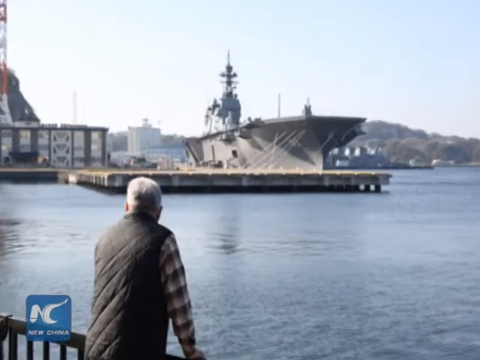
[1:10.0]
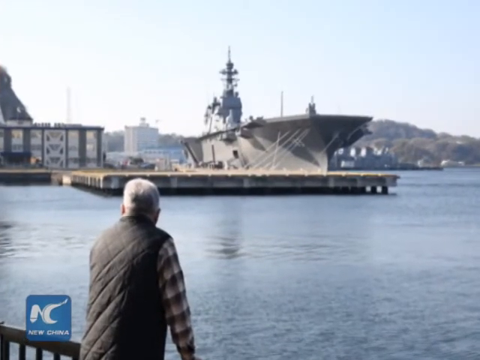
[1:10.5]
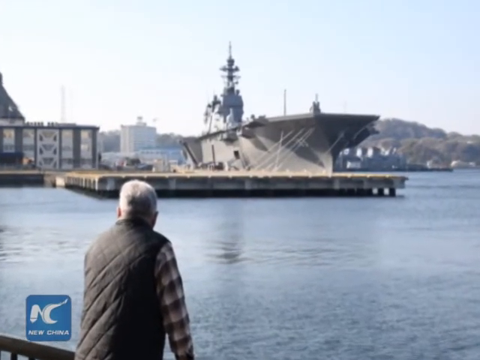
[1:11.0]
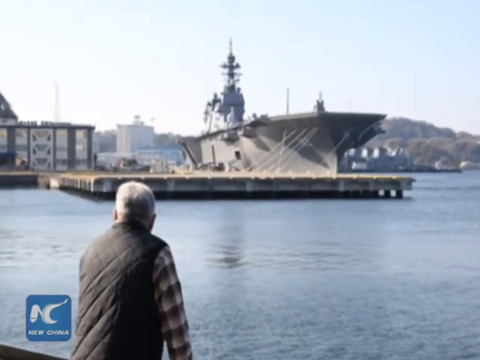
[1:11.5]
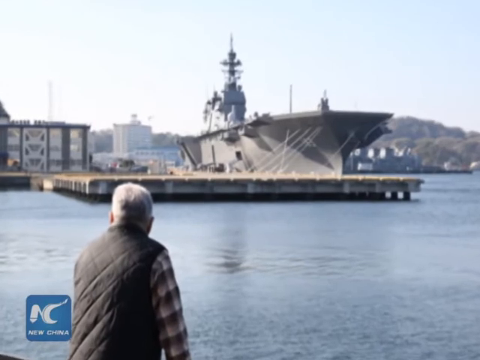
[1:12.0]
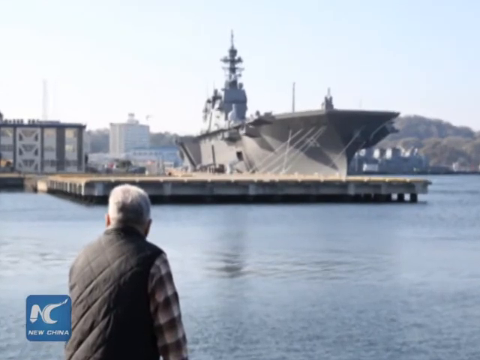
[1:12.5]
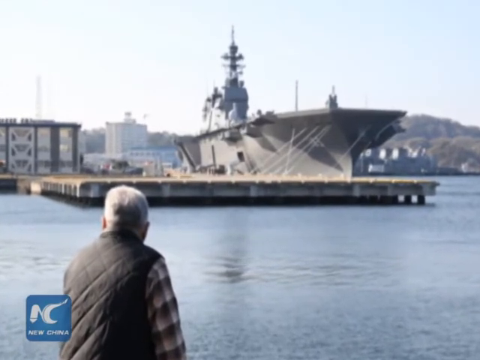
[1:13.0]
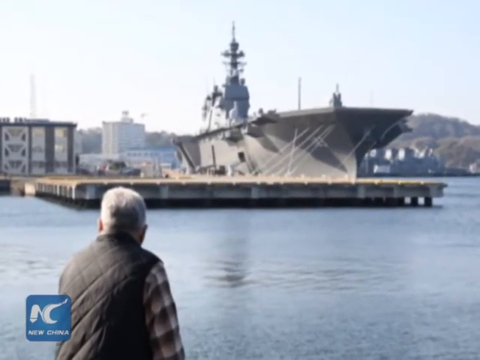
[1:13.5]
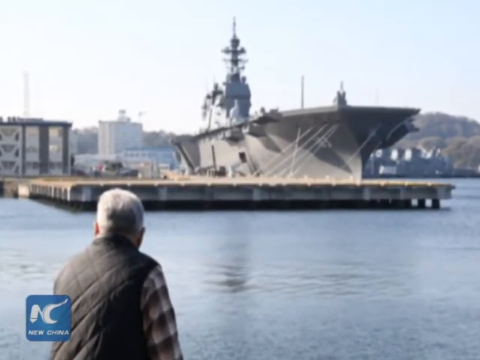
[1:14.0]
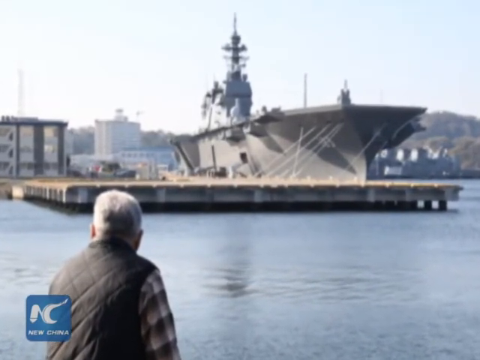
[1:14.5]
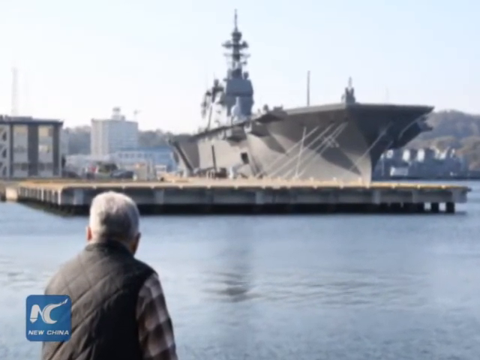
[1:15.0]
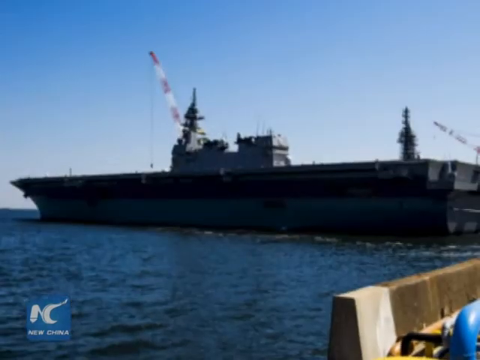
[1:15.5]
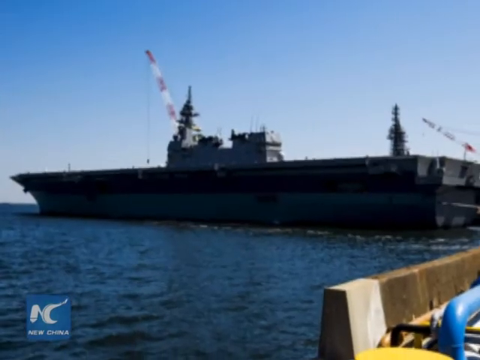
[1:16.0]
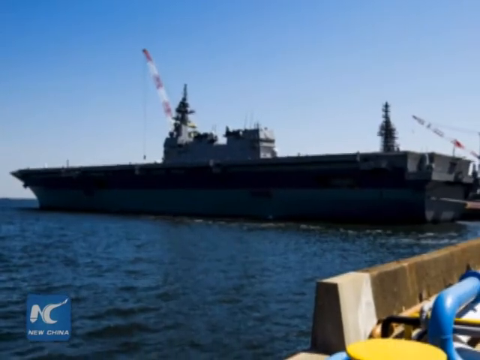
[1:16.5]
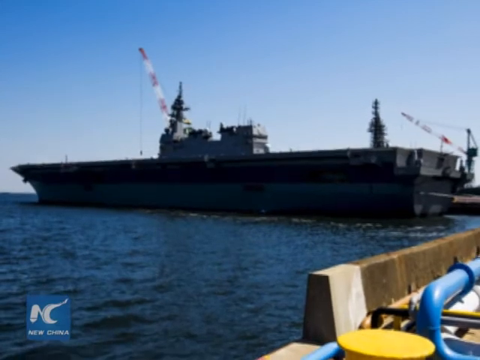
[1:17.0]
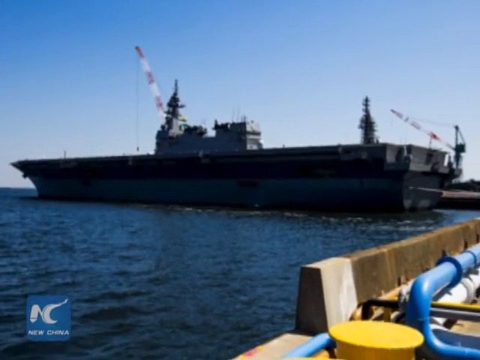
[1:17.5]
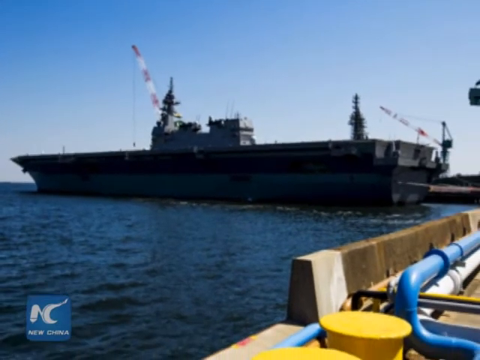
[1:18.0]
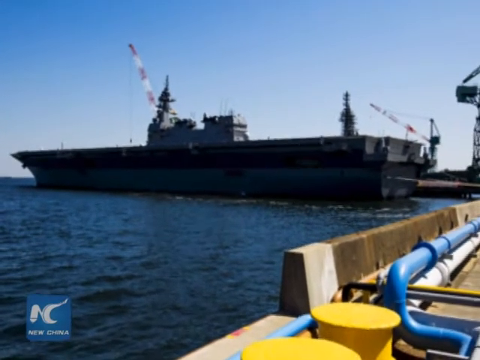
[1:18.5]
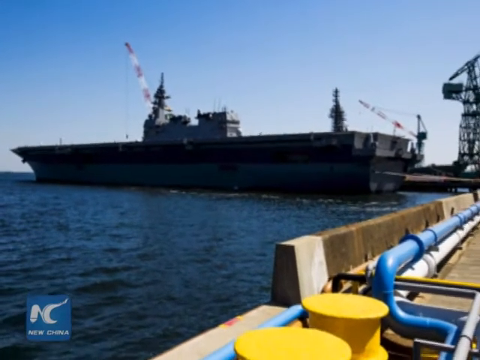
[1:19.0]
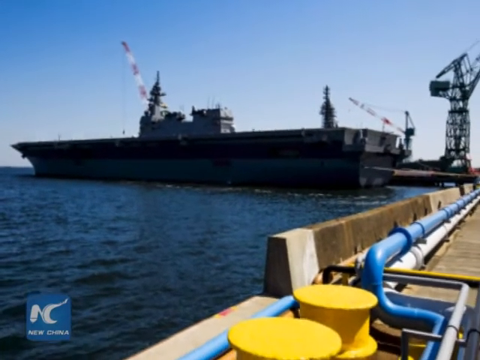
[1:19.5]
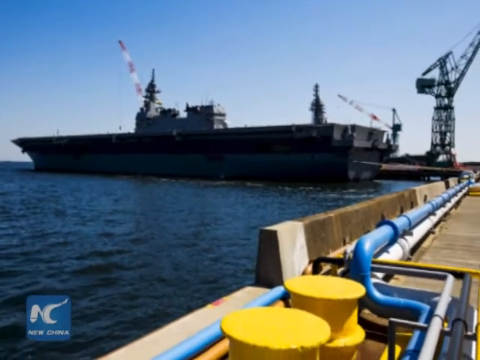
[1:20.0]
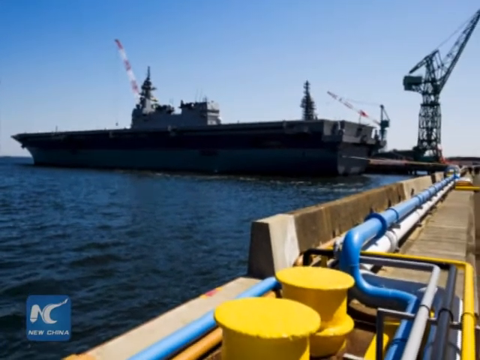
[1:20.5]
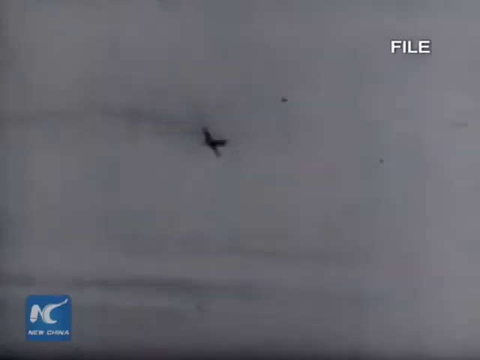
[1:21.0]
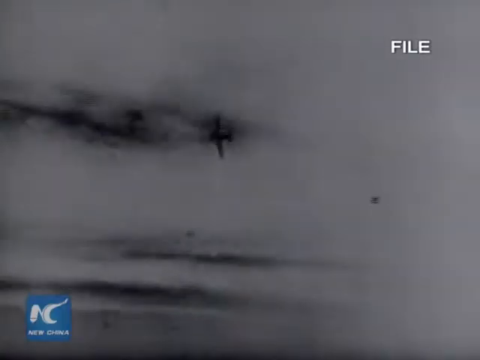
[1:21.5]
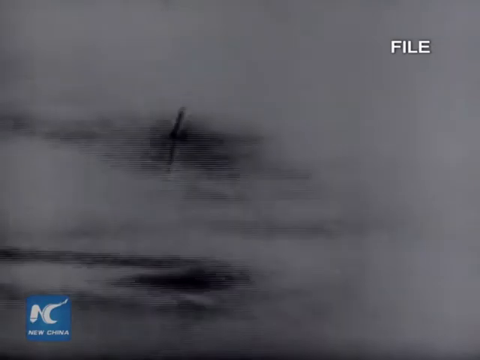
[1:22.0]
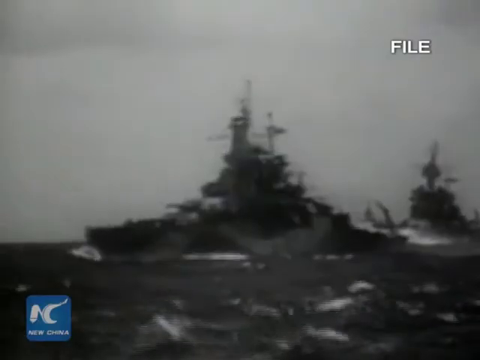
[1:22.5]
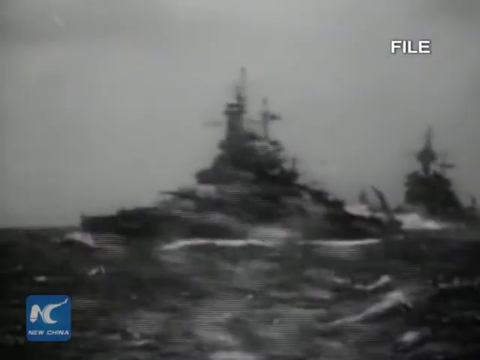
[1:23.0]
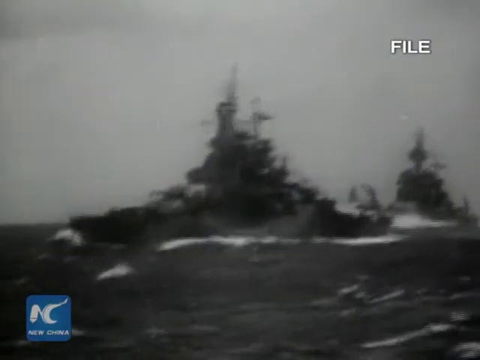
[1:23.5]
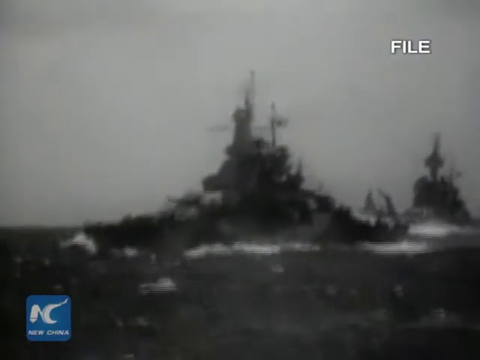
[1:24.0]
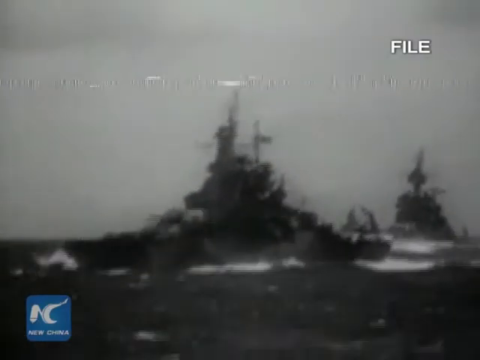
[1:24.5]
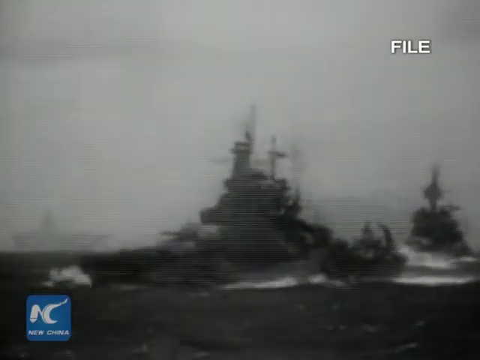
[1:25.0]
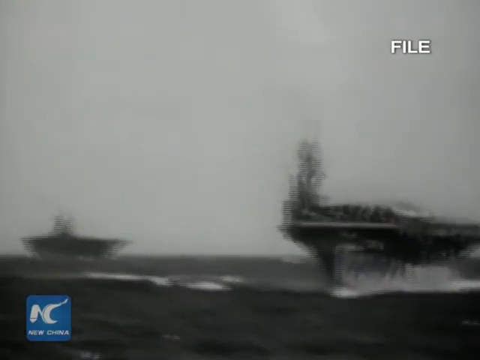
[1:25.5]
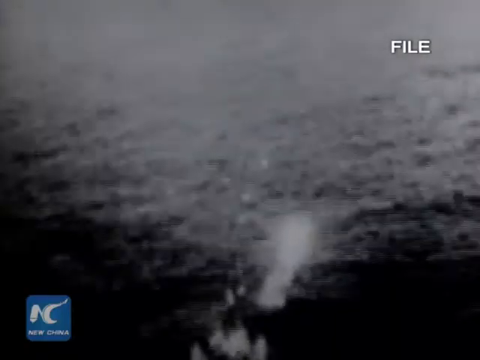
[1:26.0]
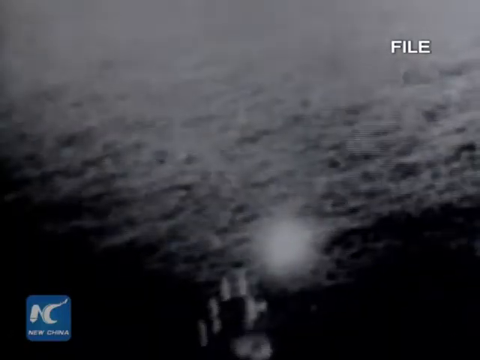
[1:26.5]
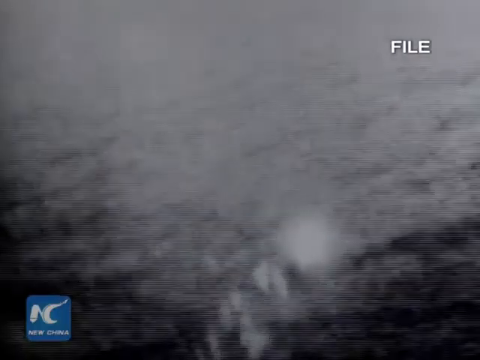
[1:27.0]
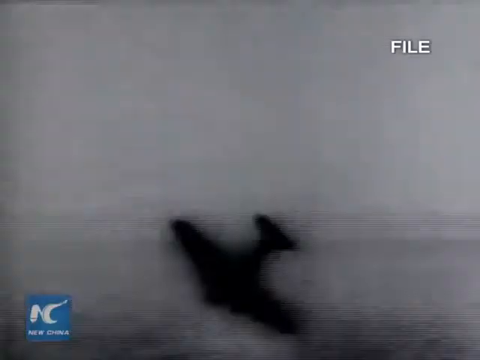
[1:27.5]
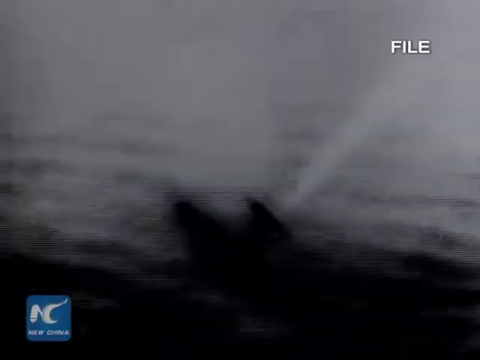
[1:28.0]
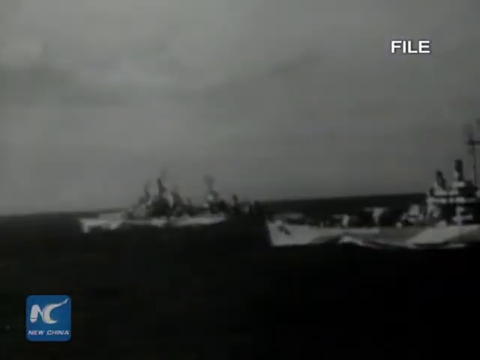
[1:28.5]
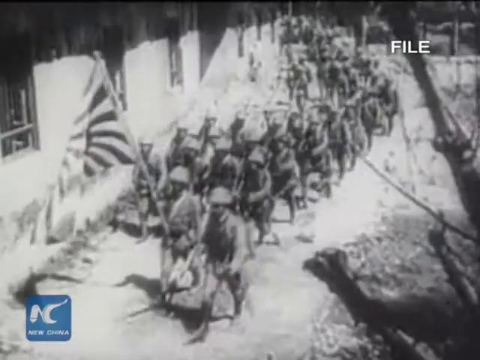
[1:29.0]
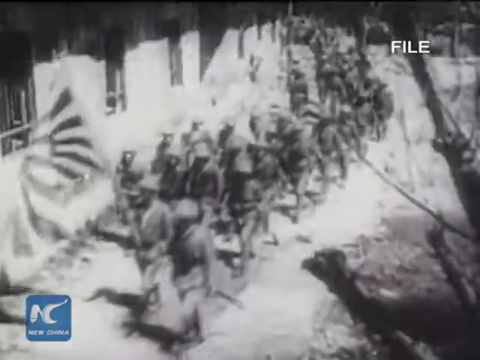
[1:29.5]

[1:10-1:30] A gray-haired old man stares out over the marina at the battleship from a distance; it is unclear whether he is Navy personnel or a civilian. He wears a flannel shirt and what looks like a brown or grayish vest. Various wide shots of the ship follow, apparently from when it was being constructed. Then footage from World War II is shown, with Kamikaze pilots crashing into planes and the Japanese Army marching into war.